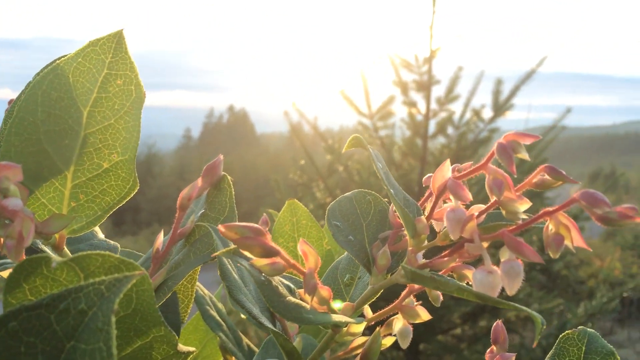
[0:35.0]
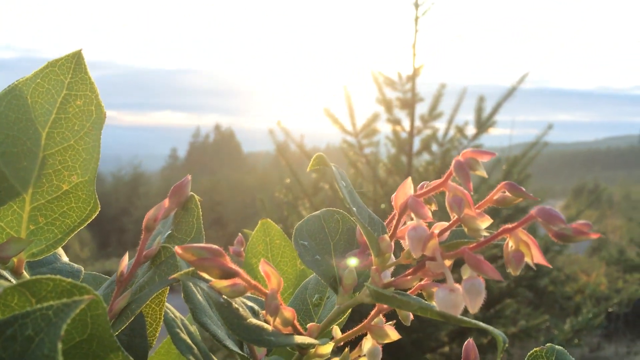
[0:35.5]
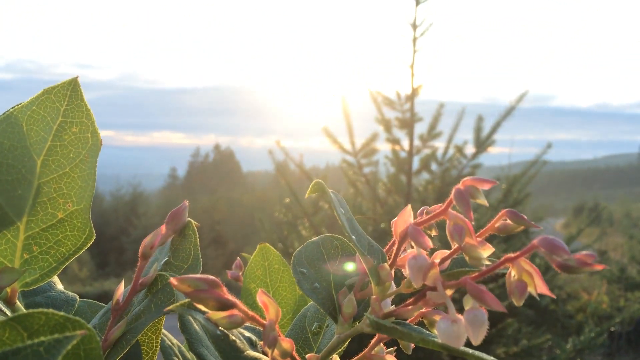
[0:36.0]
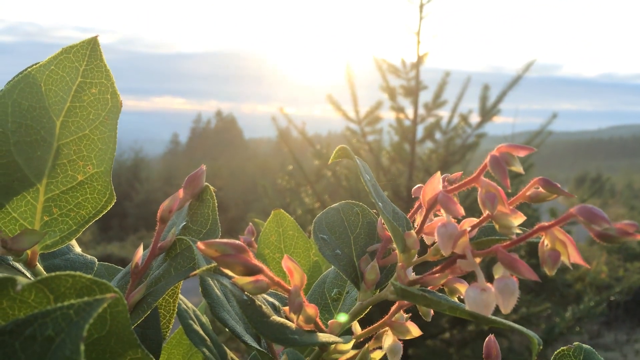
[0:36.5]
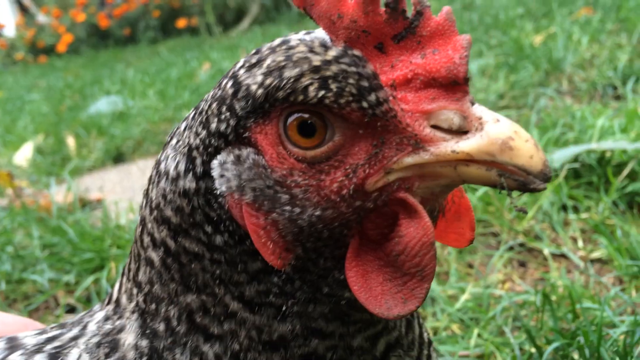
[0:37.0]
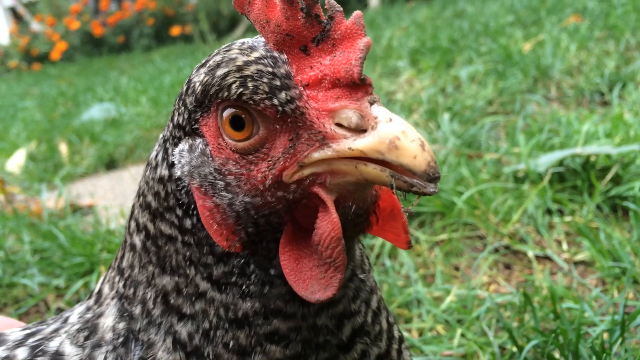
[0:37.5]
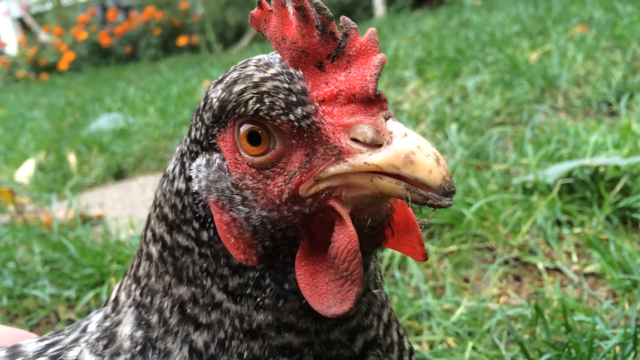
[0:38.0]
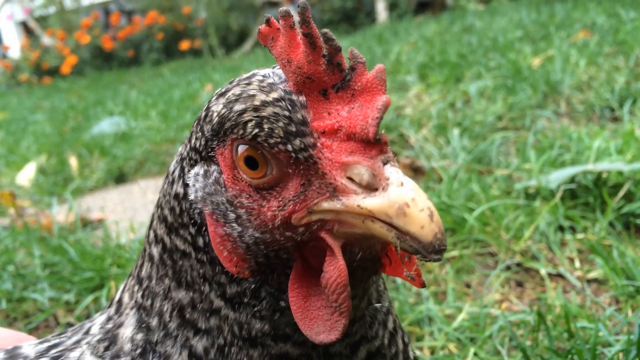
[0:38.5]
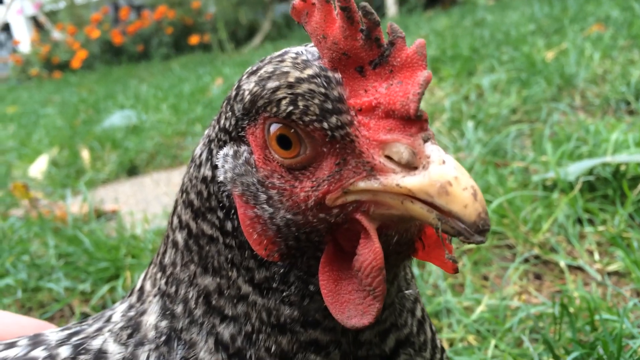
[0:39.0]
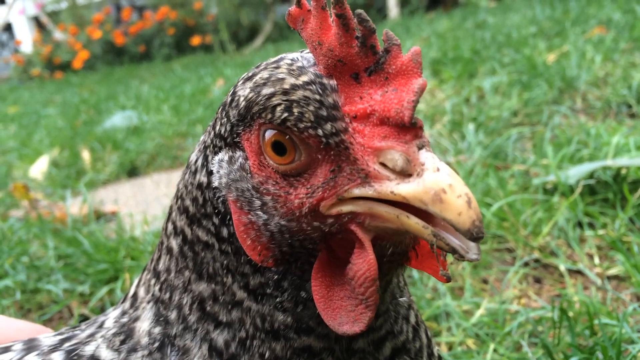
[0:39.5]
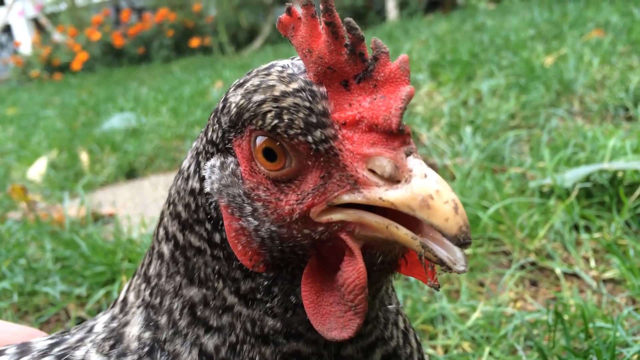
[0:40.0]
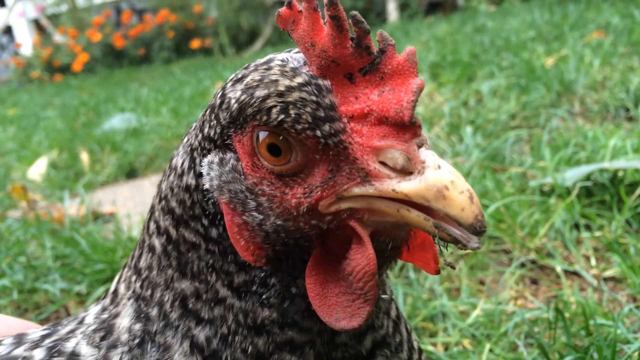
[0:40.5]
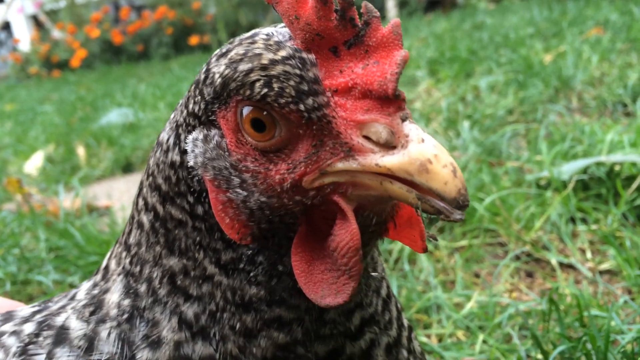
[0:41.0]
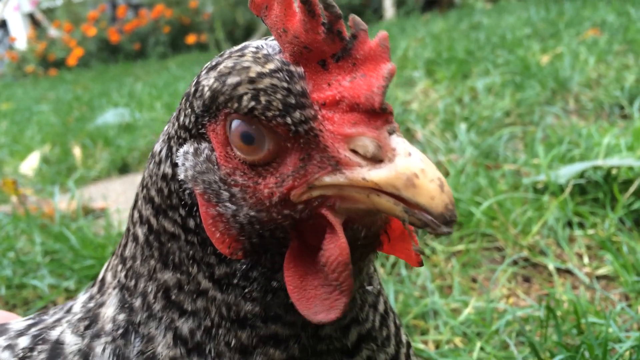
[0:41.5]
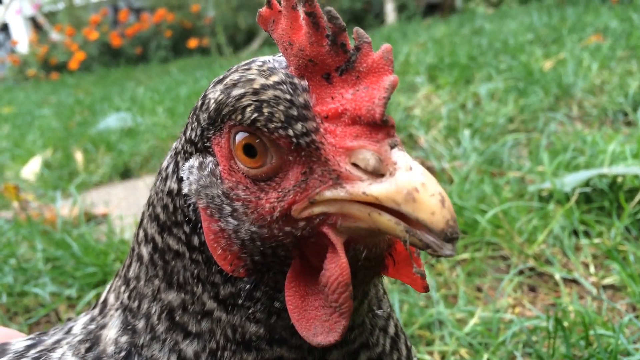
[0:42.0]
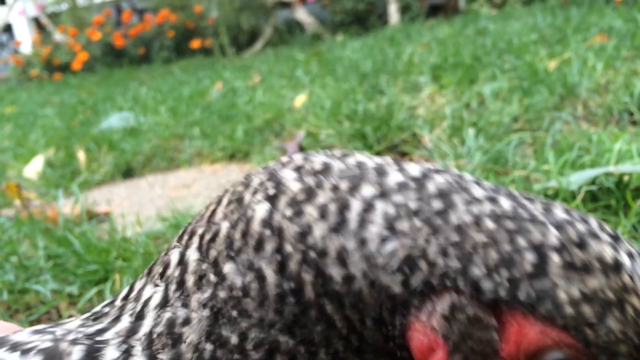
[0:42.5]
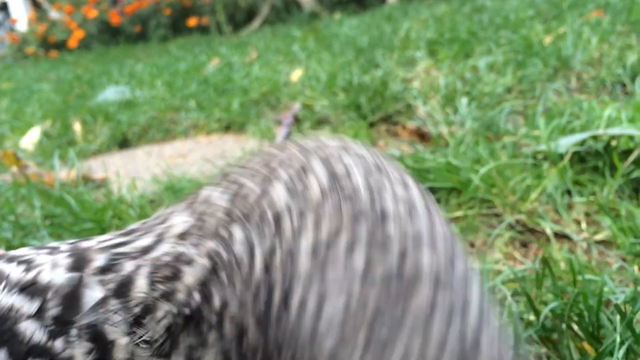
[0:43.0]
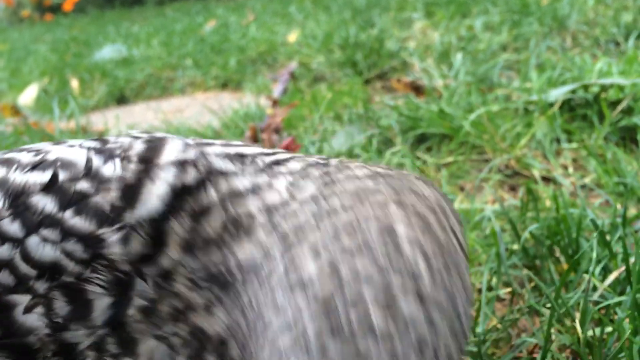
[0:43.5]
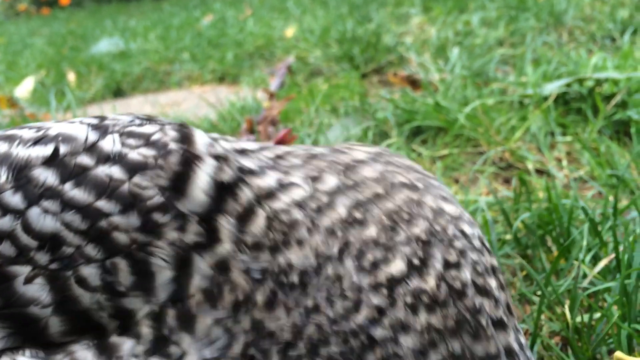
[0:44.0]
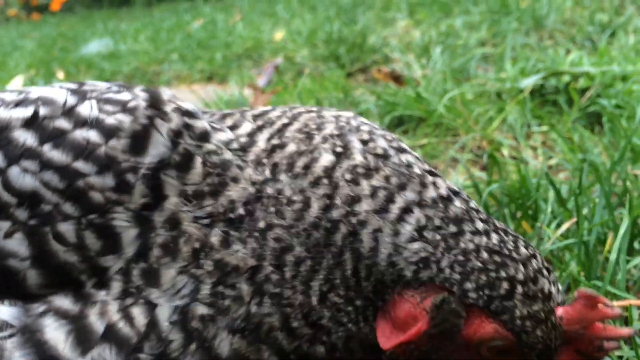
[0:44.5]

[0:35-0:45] The shot opens on the green leaves and pink stems, then cuts to a rooster or chicken, apparently a male, with red under its chin and on top of its head, orange eyes, and a white body with black feathers sort of patterned through it. The chicken looks around a couple of times, drops its neck down and picks at the green grass about four or five times. Behind it, toward the top left of the frame, is a bed of flowers with orange bulbs. The camera tilts down, but nothing far behind the bird can be seen. It blinks a few times as it looks around, and it opens its beak slowly while looking around before dropping down to peck again.